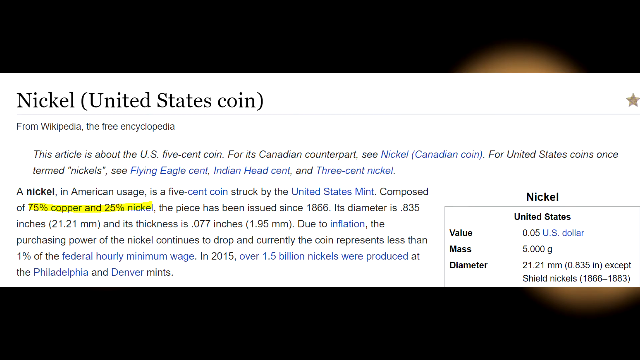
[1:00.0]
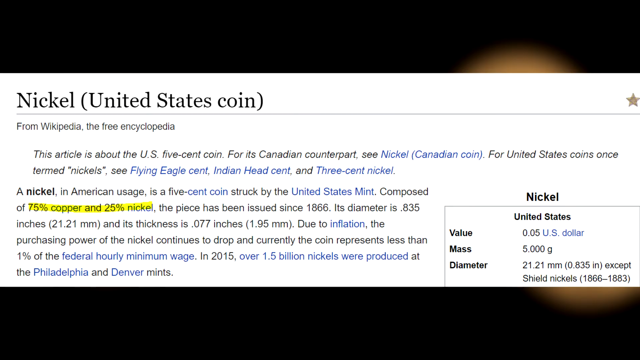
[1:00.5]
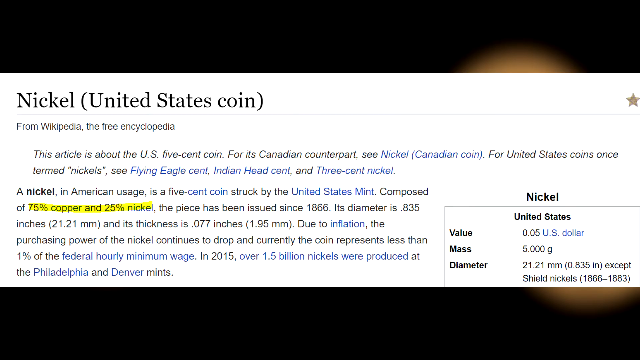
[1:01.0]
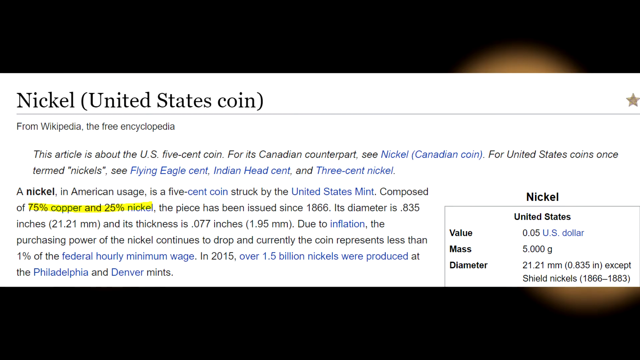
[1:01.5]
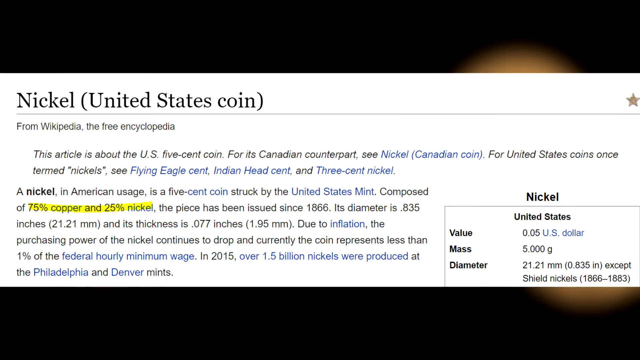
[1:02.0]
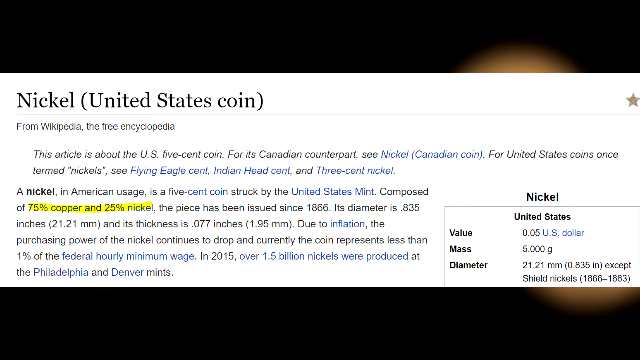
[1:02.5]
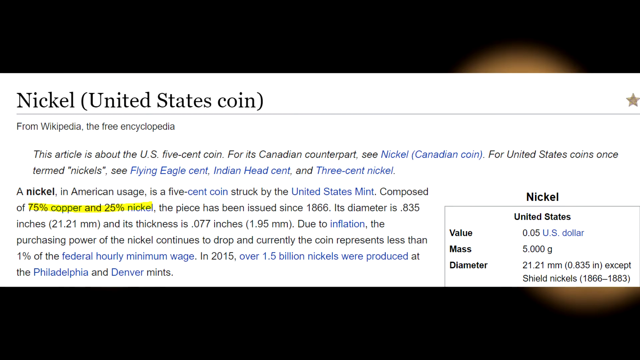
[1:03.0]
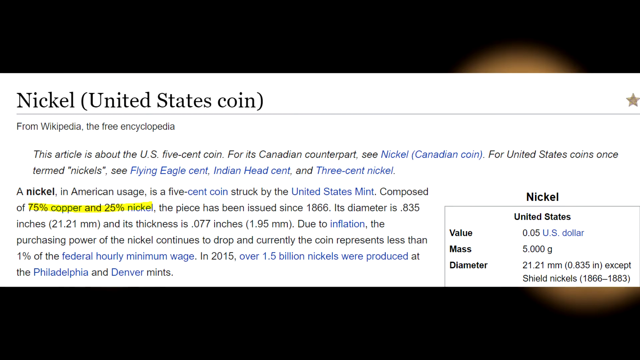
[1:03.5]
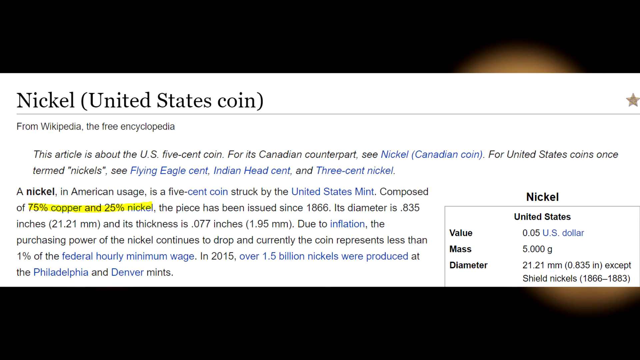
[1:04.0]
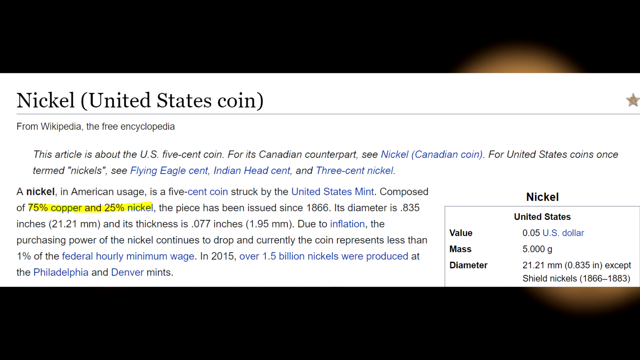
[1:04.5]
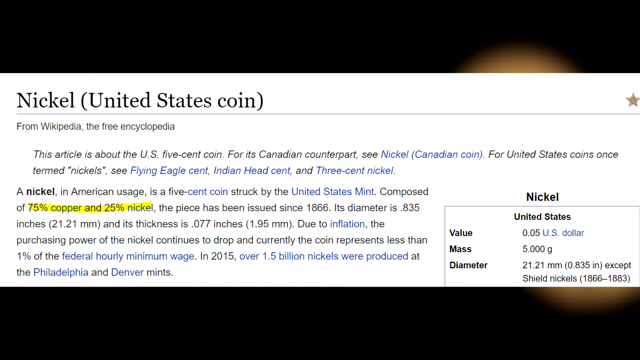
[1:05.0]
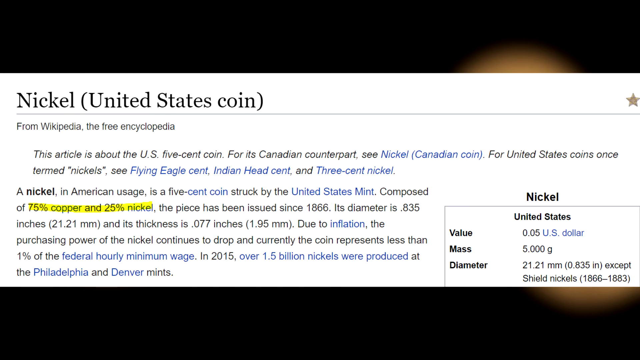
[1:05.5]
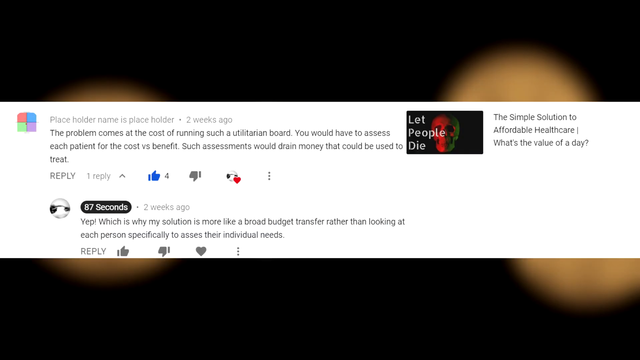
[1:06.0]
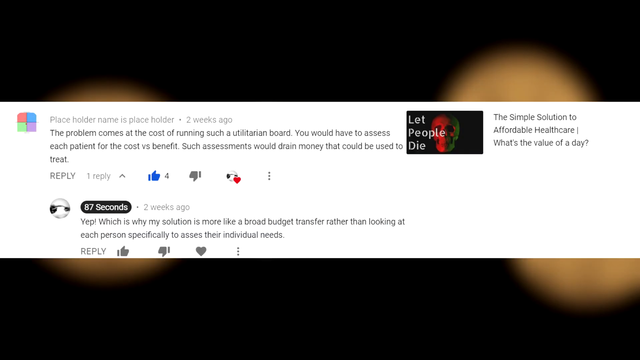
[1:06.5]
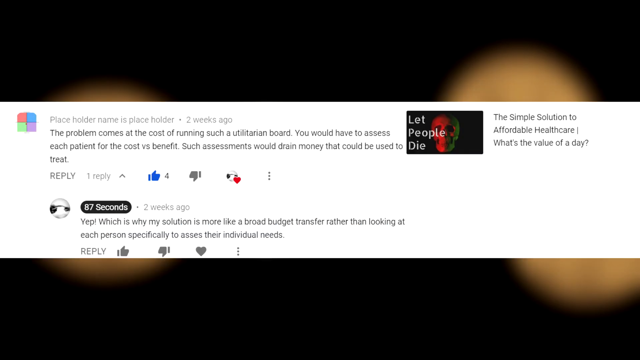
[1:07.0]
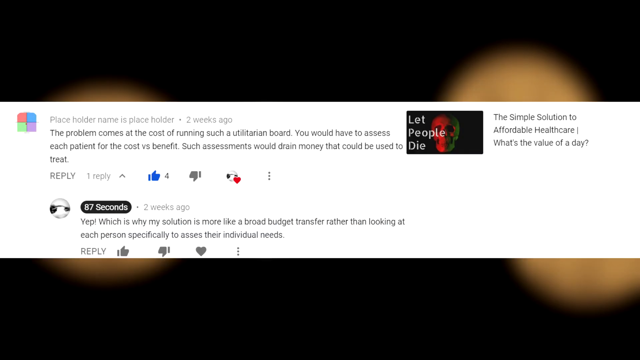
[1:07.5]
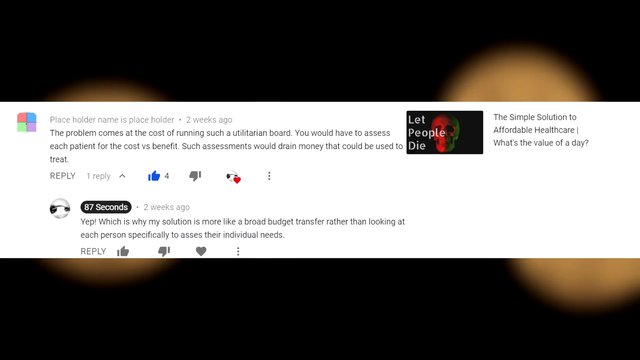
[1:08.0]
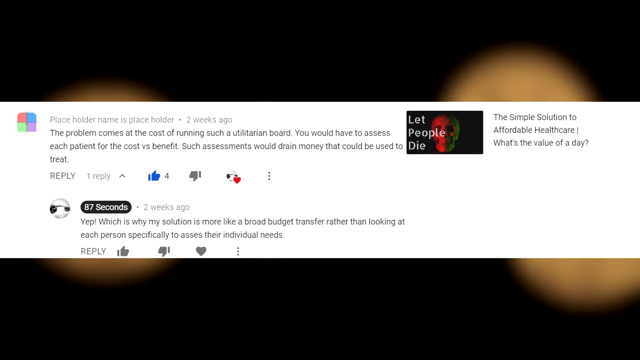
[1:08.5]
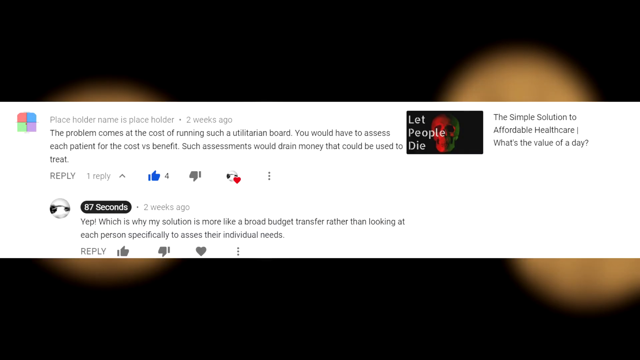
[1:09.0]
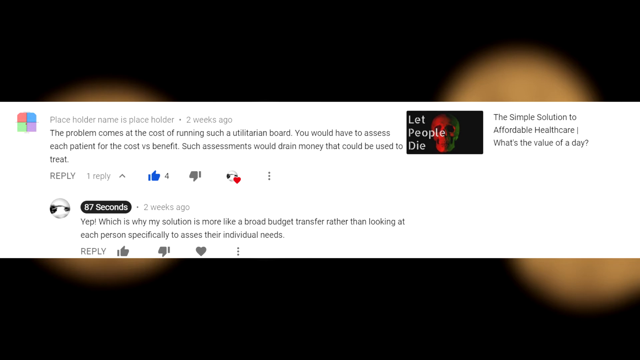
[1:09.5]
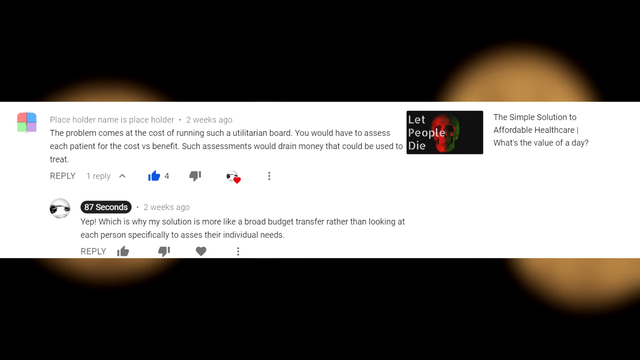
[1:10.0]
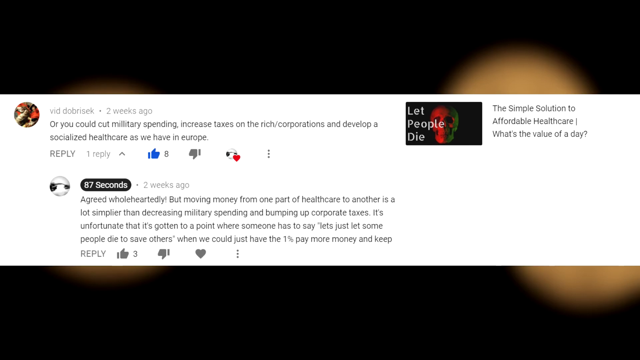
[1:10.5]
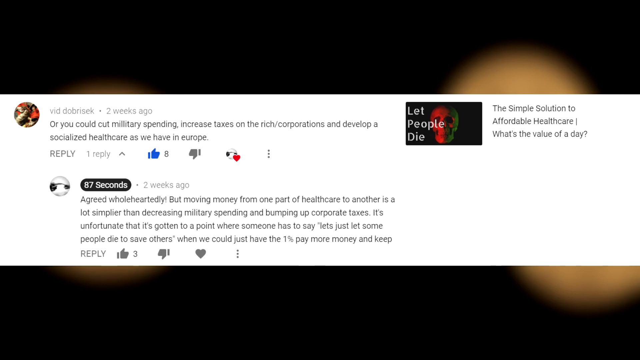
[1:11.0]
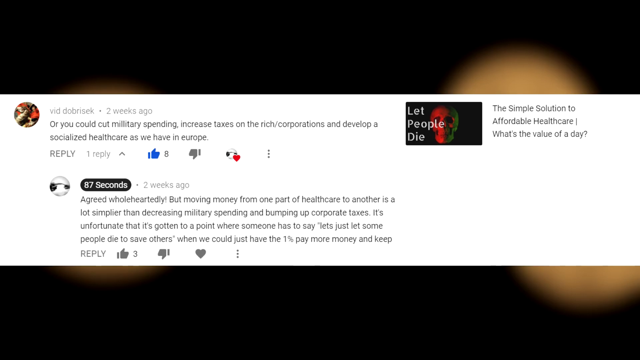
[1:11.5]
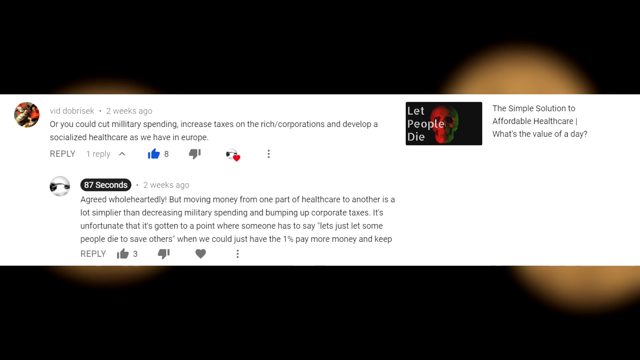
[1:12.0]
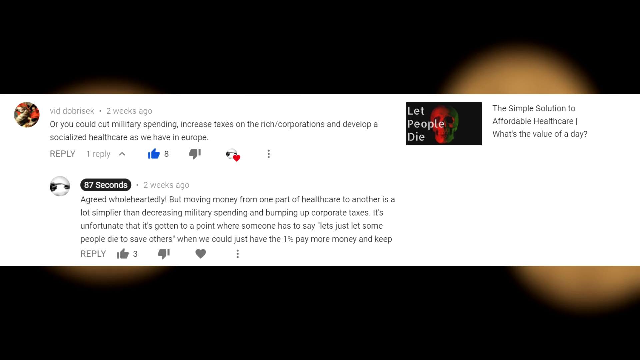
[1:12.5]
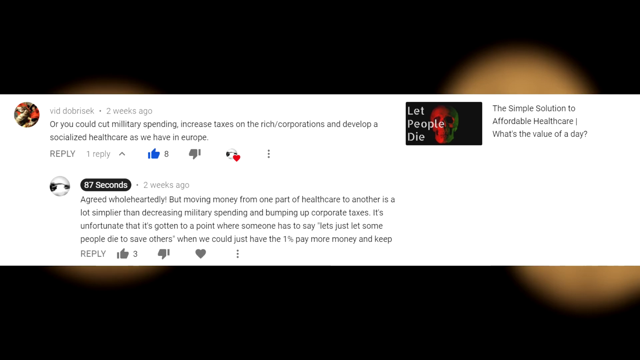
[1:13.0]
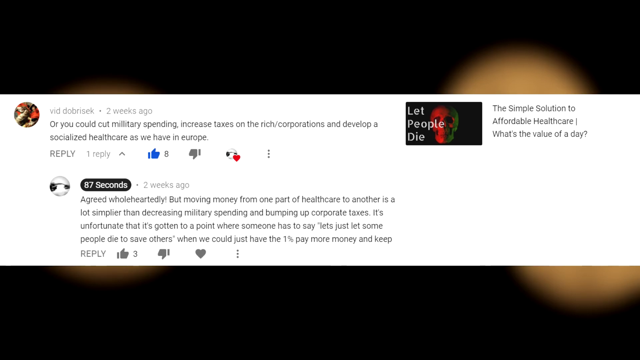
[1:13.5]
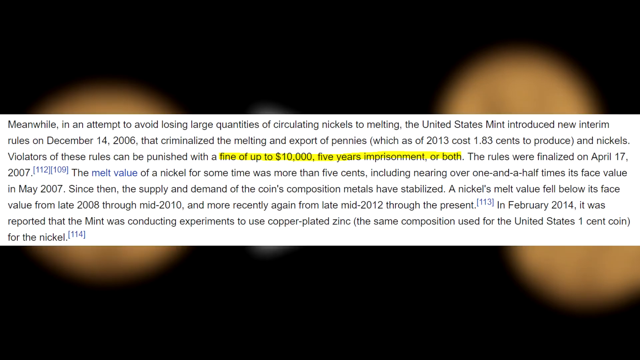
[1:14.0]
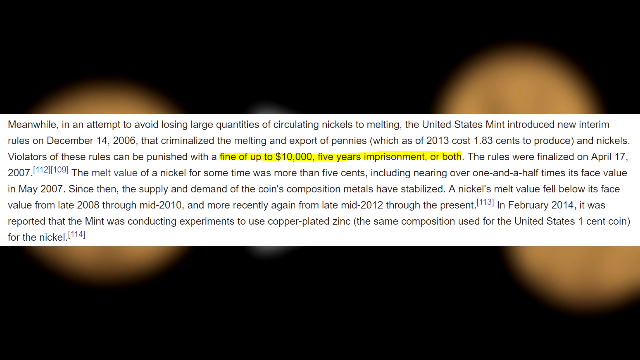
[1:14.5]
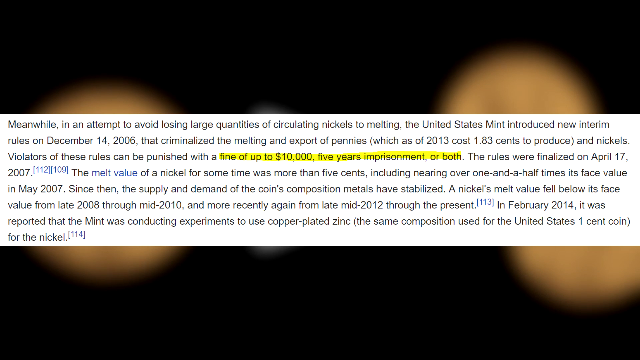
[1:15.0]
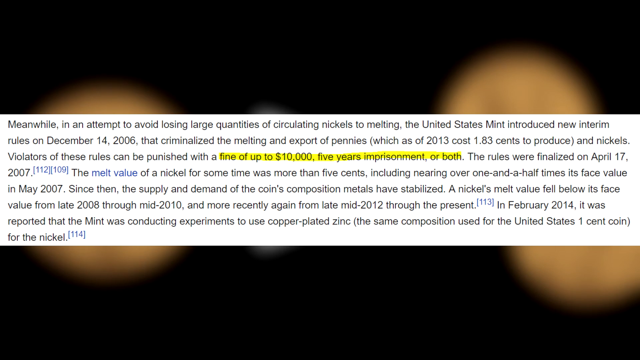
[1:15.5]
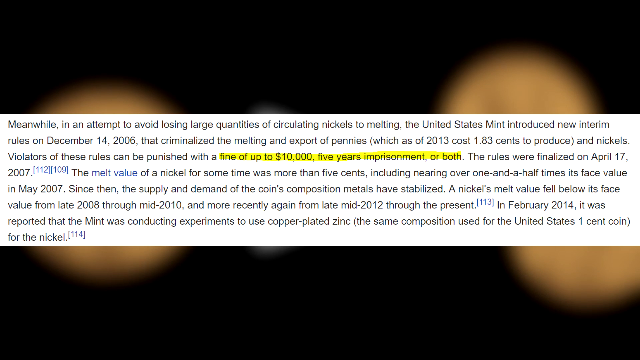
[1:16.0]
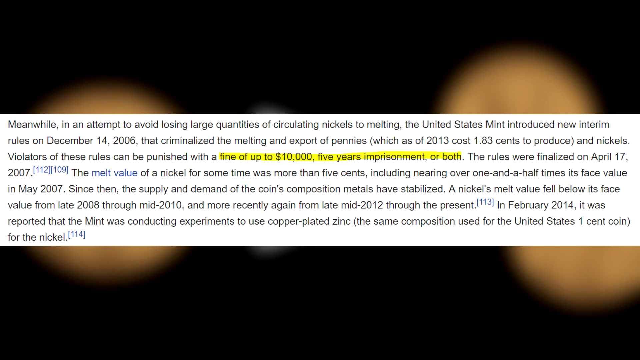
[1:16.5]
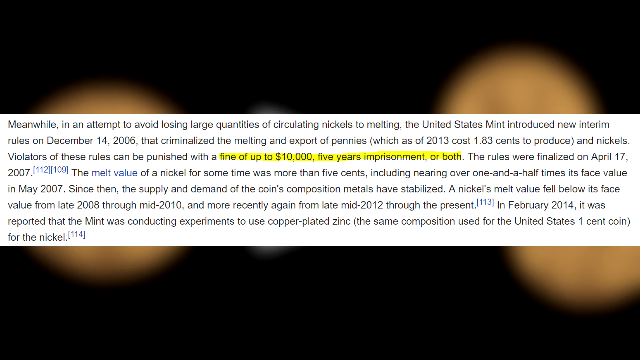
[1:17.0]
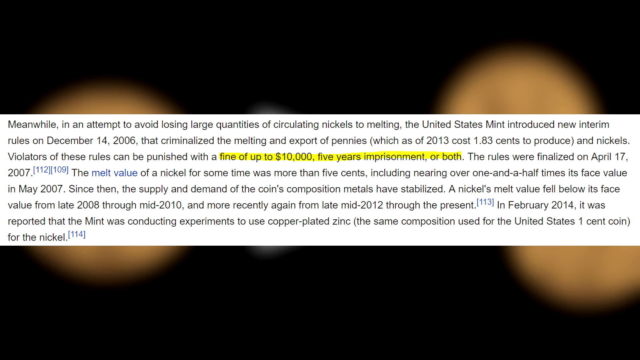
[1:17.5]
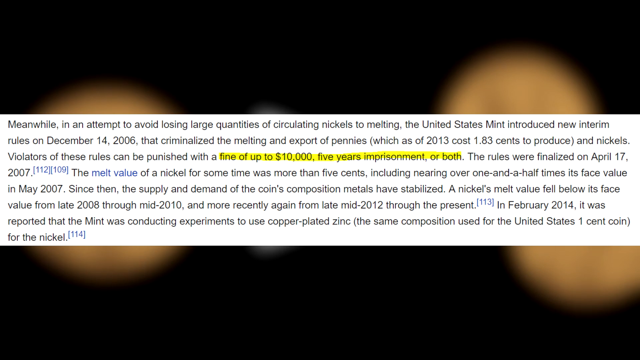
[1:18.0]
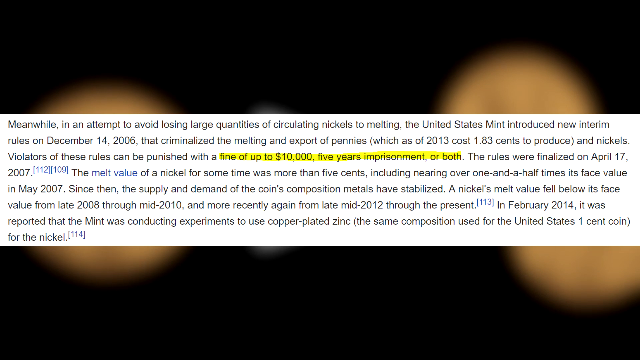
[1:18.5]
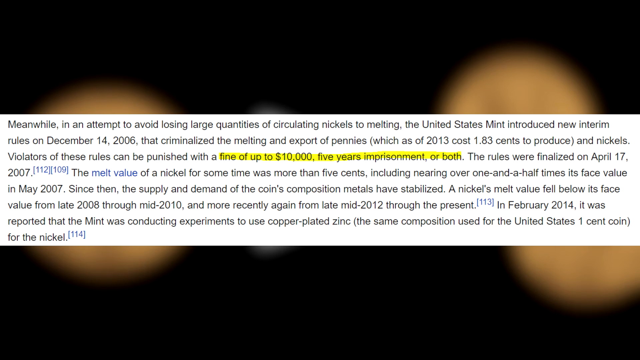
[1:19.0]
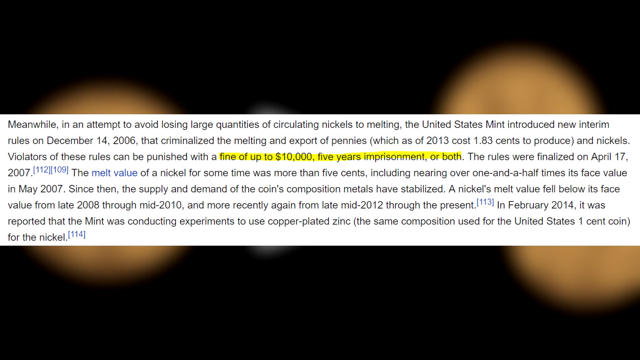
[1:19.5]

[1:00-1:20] A Wikipedia page for the nickel, the United States coin, appears. It states that a nickel, in American usage, is a five cent coin struck by the United States mint, currently composed of 75% copper and 25% nickel and issued since 1866. Its diameter is approximately 21 millimeters and its thickness almost two millimeters. Due to inflation the purchasing power of the nickel continues to drop, and the coin currently represents less than 1% of the minimum wage. In 2015, 1.5 billion nickels were produced. A discussion from a web page about cutting military spending follows, stating that it has become a criminal offence to melt down coins because the face value is less than the value of the metals, with a fine of up to $10,000, imprisonment of up to five years, or both.